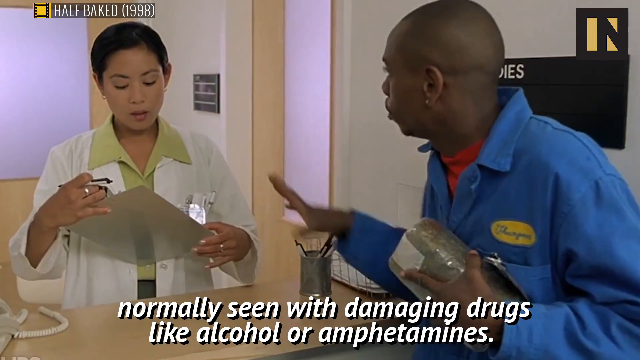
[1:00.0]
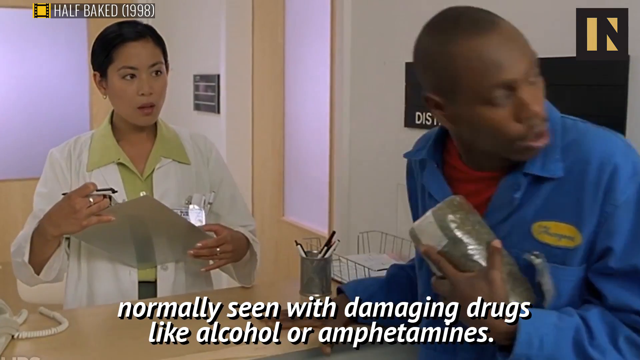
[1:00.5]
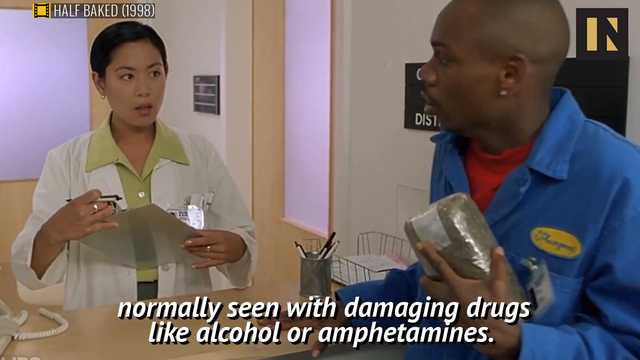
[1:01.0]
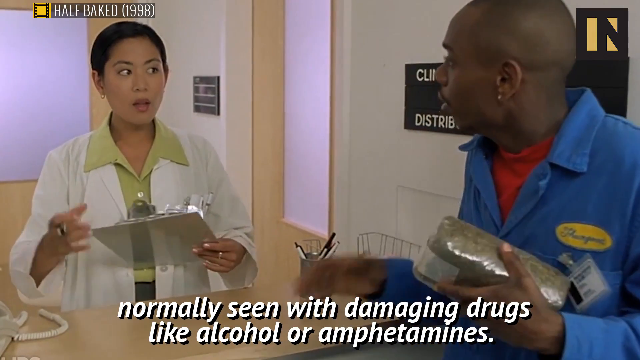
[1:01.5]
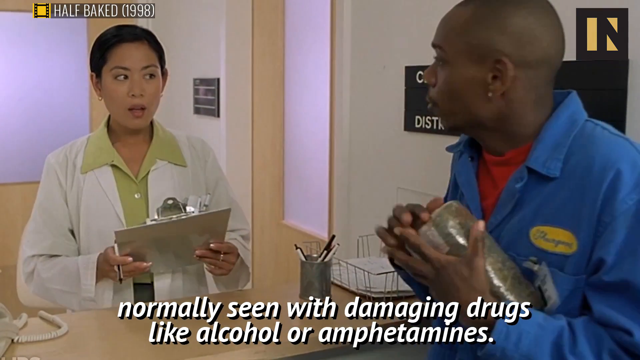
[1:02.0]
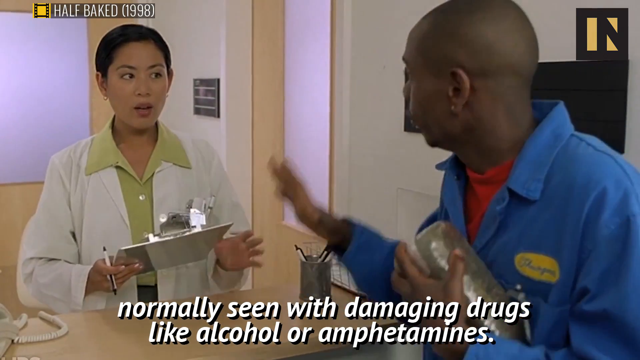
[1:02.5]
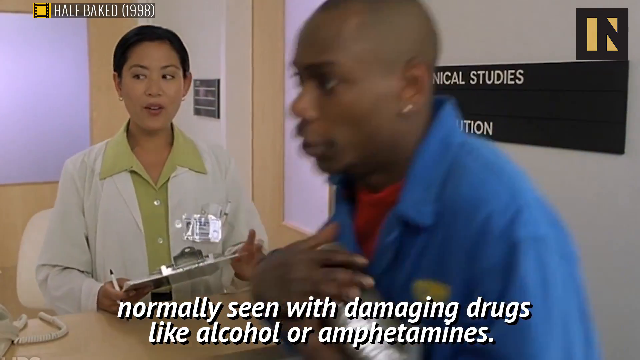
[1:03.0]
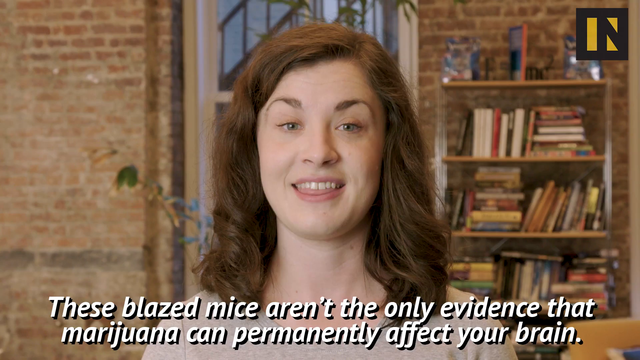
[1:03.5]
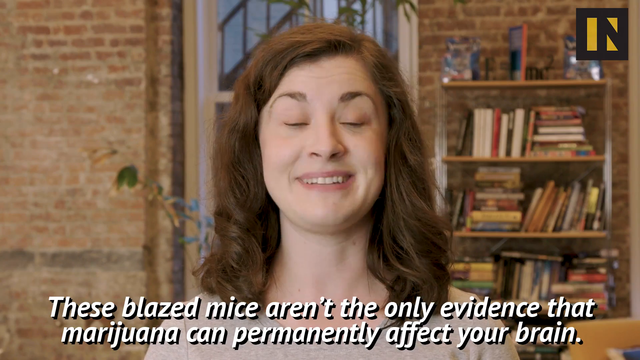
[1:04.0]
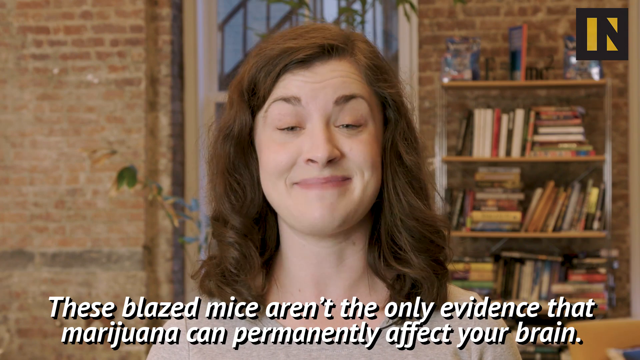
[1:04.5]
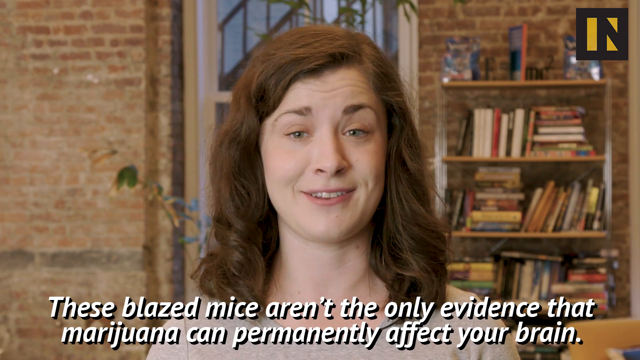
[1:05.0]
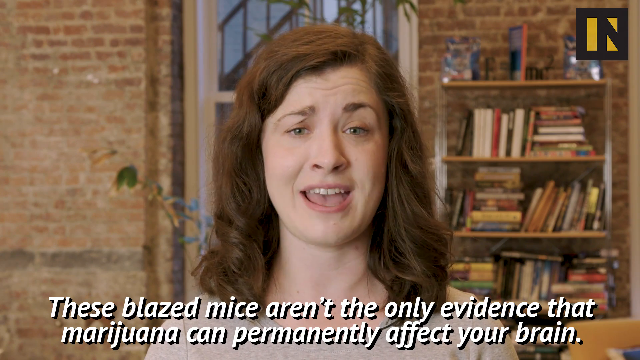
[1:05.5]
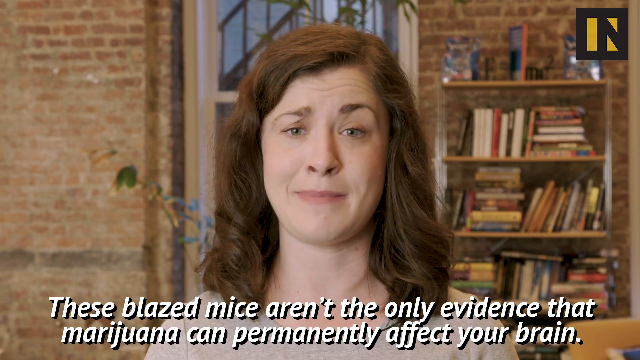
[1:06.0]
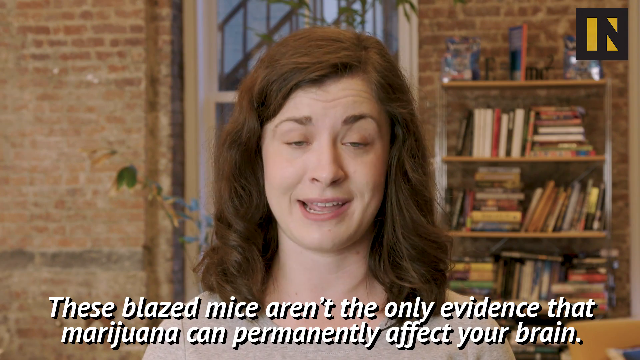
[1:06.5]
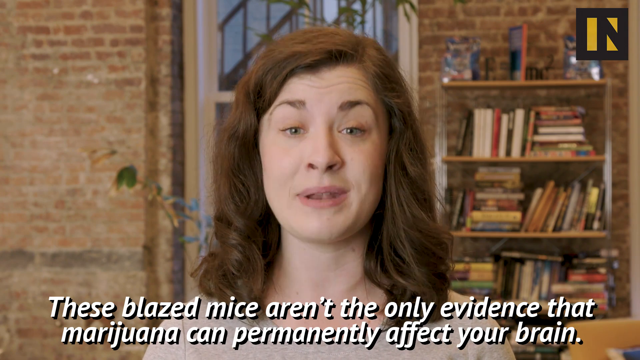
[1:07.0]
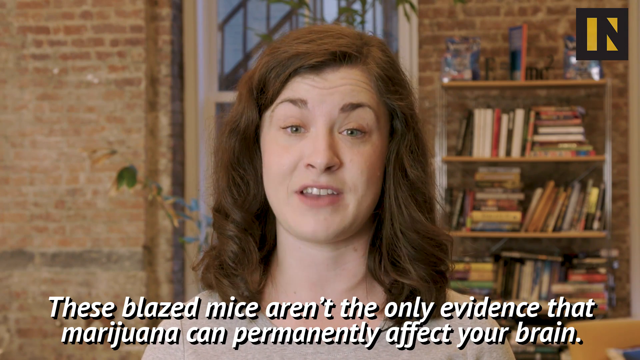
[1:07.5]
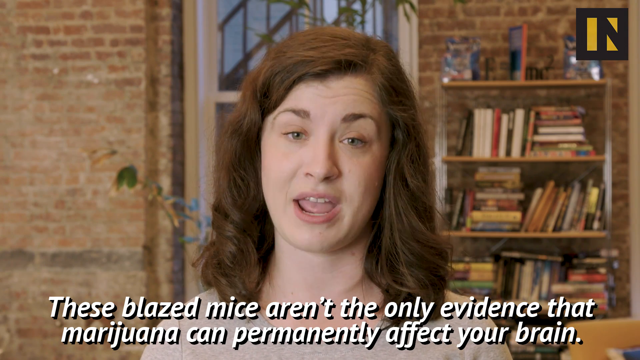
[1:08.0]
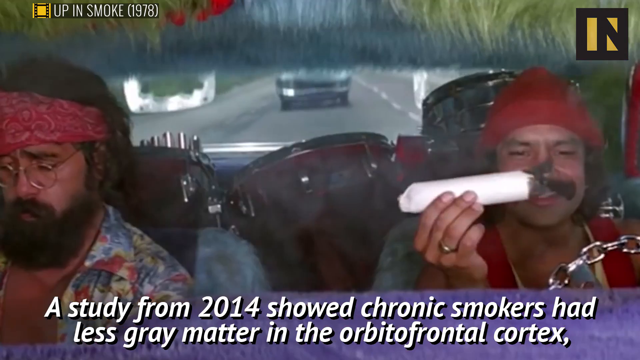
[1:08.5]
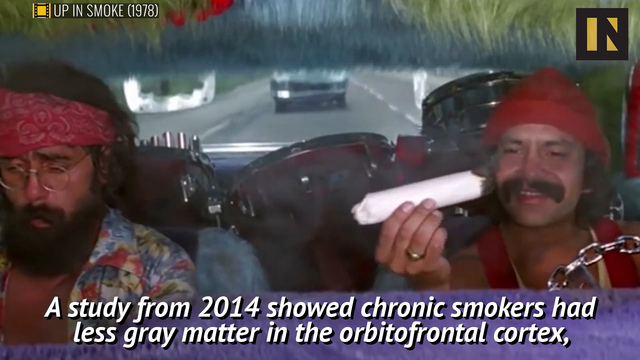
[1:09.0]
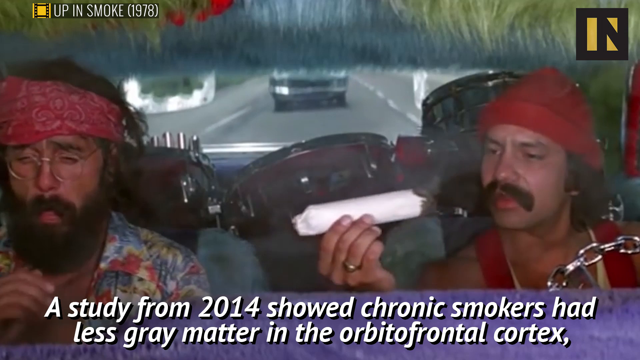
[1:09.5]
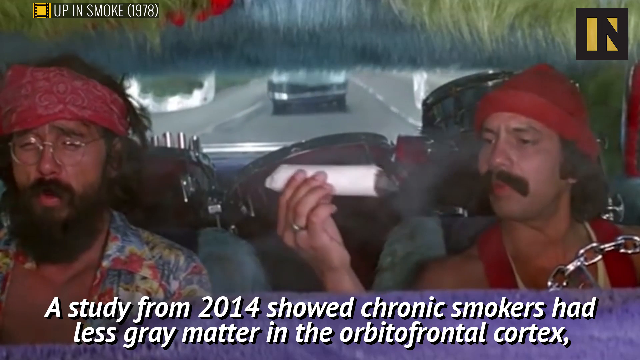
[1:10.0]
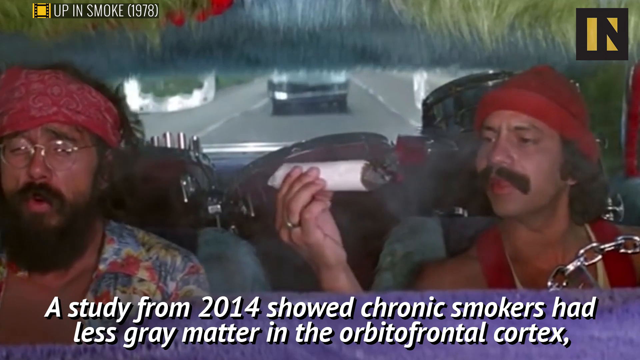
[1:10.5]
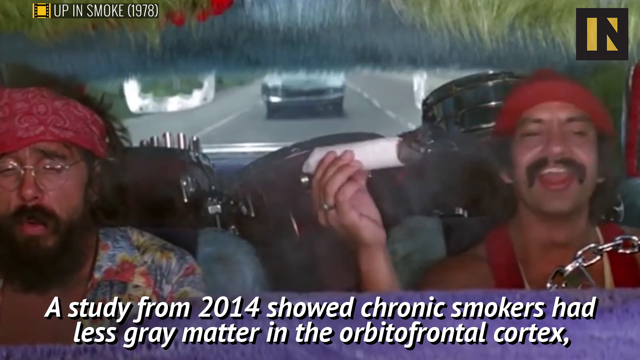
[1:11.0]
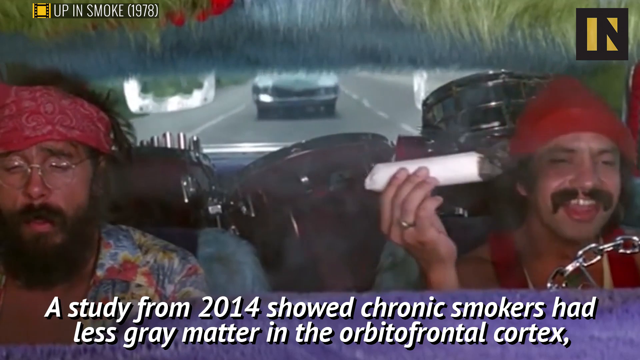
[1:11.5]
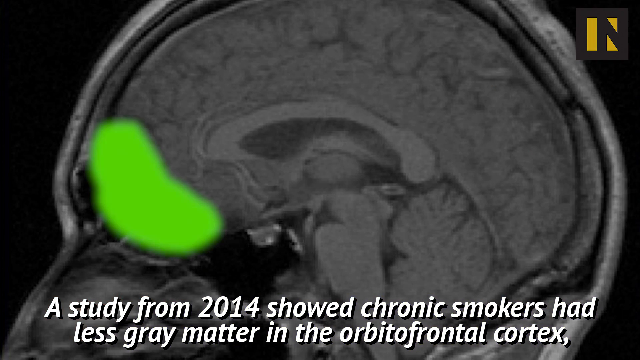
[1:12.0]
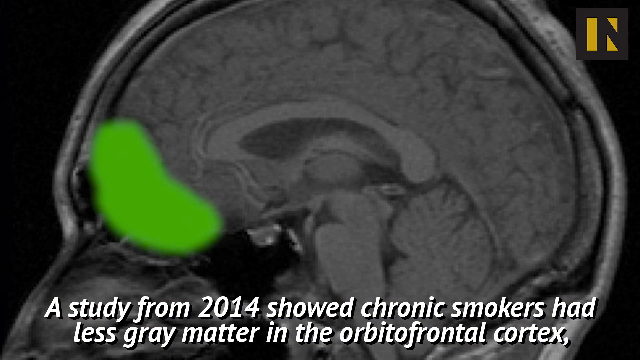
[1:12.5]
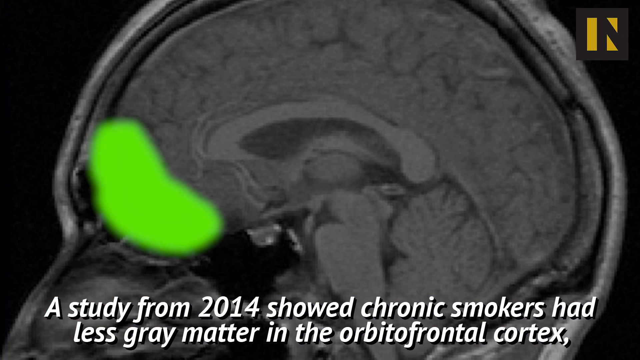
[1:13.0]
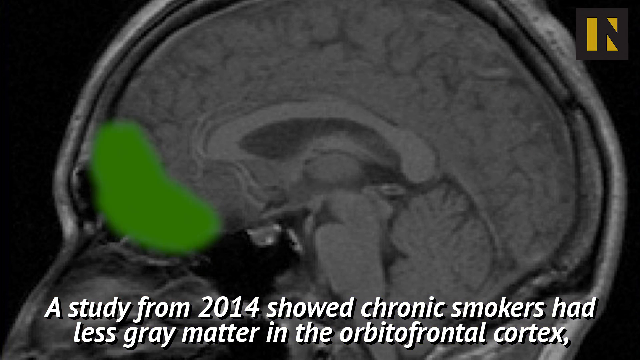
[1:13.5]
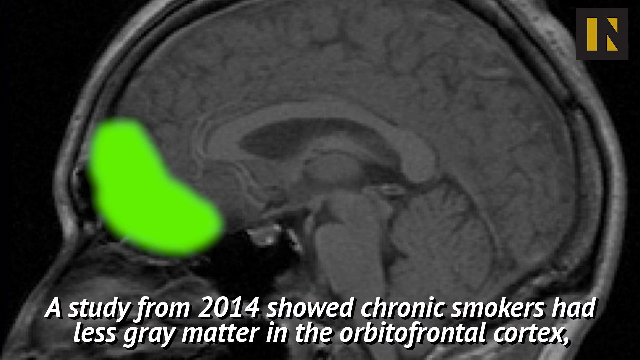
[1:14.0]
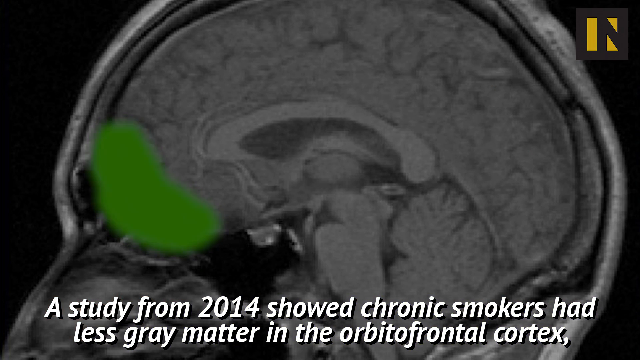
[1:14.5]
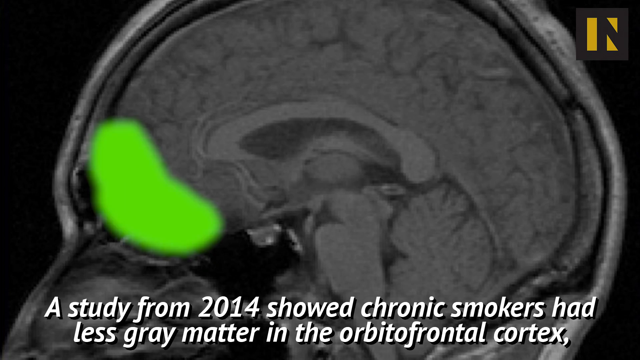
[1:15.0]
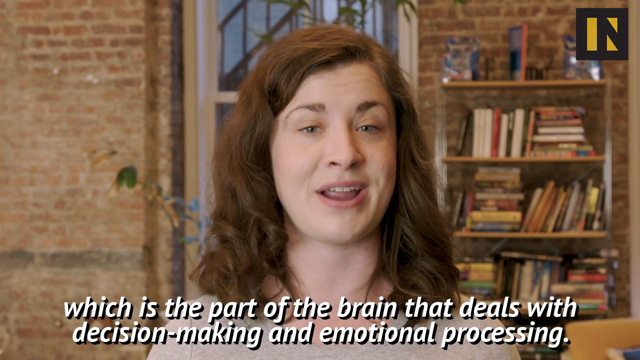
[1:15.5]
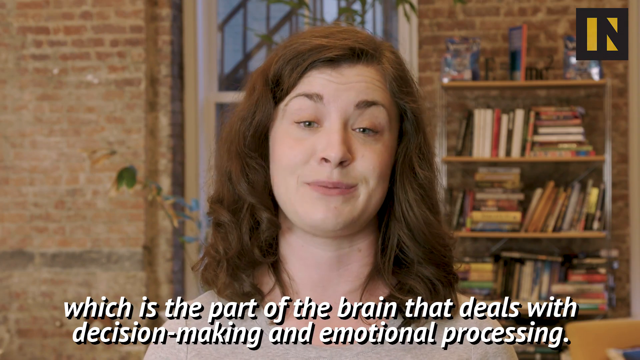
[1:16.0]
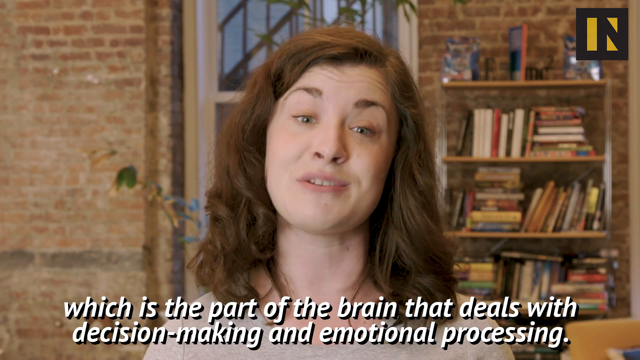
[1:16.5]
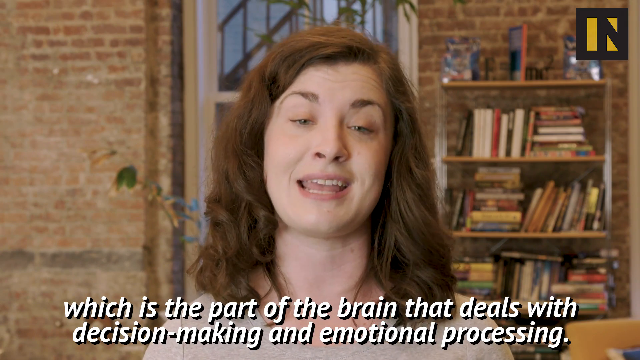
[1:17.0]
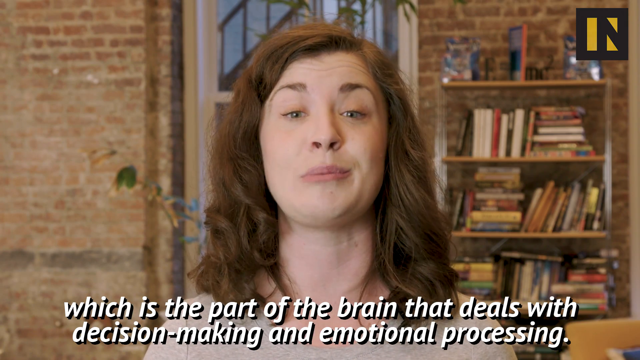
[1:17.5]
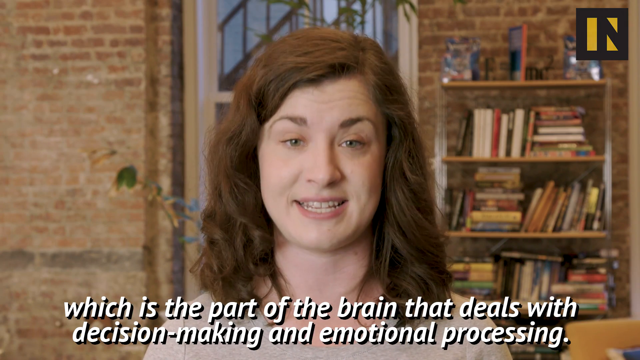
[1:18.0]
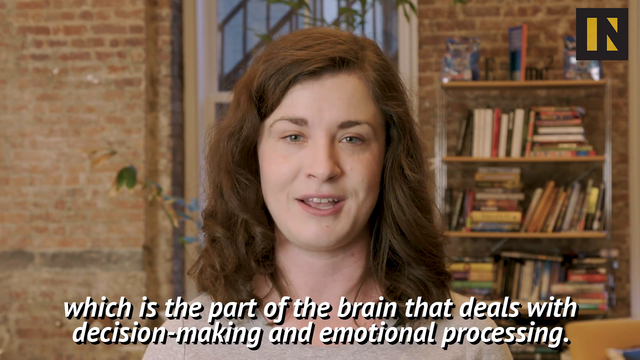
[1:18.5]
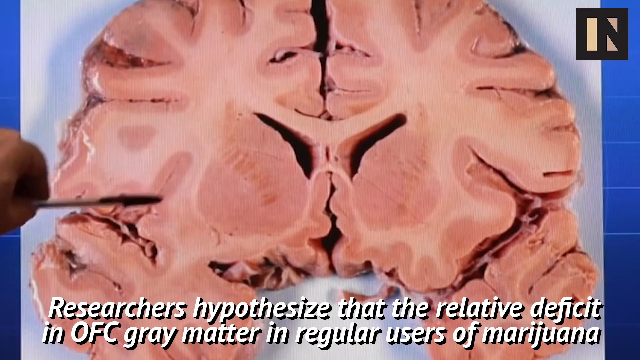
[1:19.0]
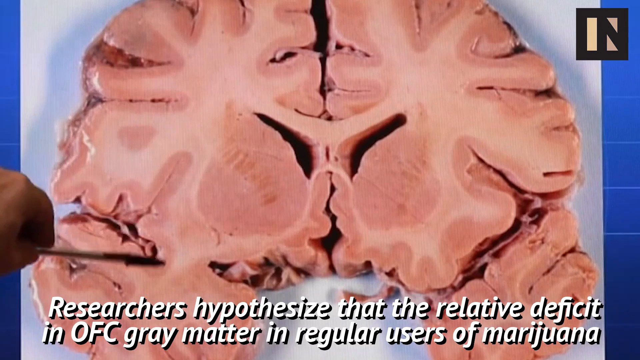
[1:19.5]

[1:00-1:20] The scene with Dave Chappelle continues, with subtitles reading "normally seen with damaging drugs like alcohol and amphetamines." As Dave Chappelle leaves the frame, the video returns to the host looking straight into the camera, with a bookshelf and books behind her. Subtitles read "aren't the only evidence that marijuana can permanently affect your brain," followed by "a study from 2014, show chronic smokers had less gray matter in their orbital frontal cortex." Behind that is a clip from Up in Smoke from 1978 in which Cheech and Chong are in their car: Cheech seems to be driving, Chong is in the passenger seat, there is a drum kit in the back seat, and they pass a toilet-paper-tube-sized marijuana joint back and forth. A graphic of a brain and skull shows where the orbital frontal cortex is, right behind the eyes, highlighted in green, with text reading "which is the part of the brain that deals with decision-making and emotional processing." A slab of brain matter then appears on a white table with a blue graphic behind it, and text begins "researchers hypothesize that the relative deficiency of OEC."